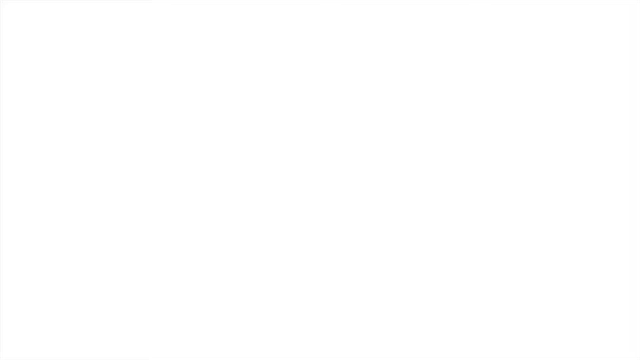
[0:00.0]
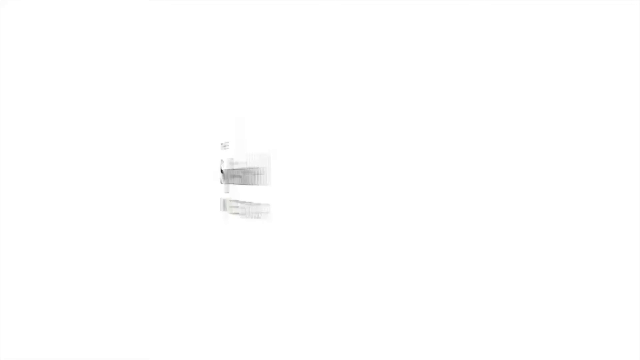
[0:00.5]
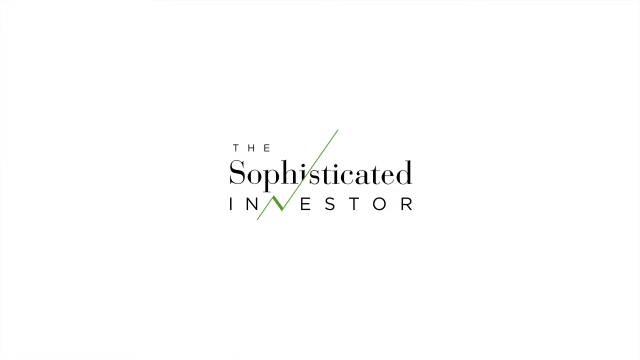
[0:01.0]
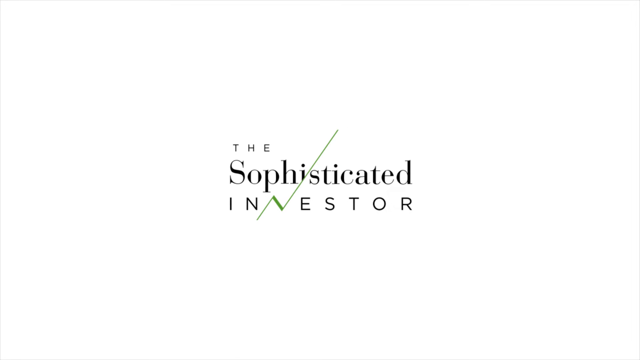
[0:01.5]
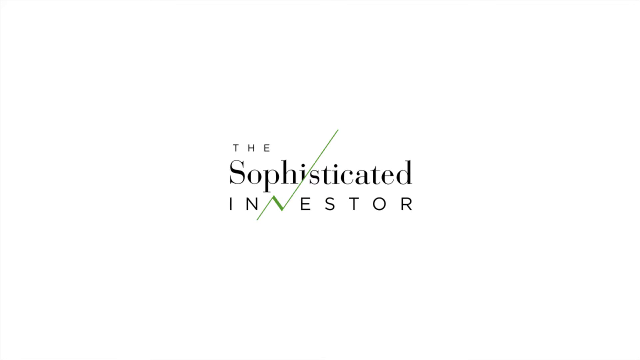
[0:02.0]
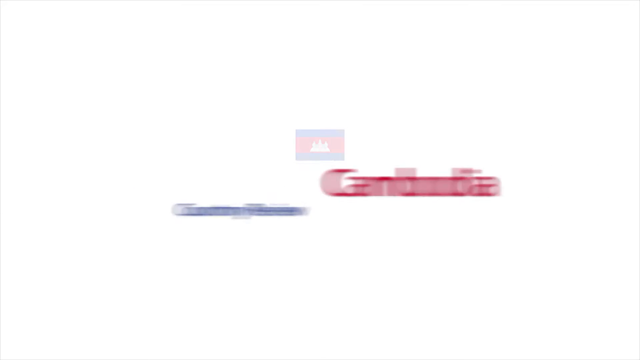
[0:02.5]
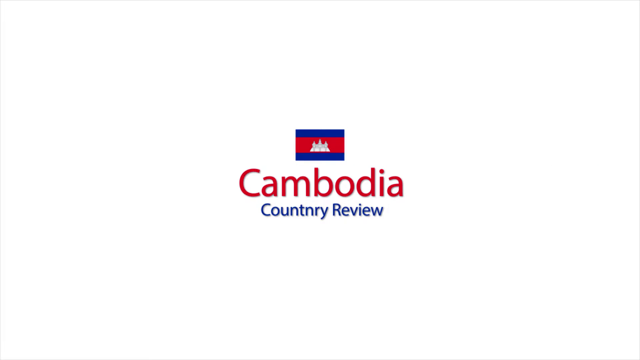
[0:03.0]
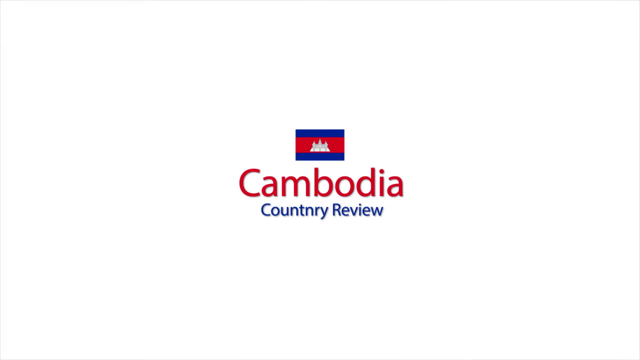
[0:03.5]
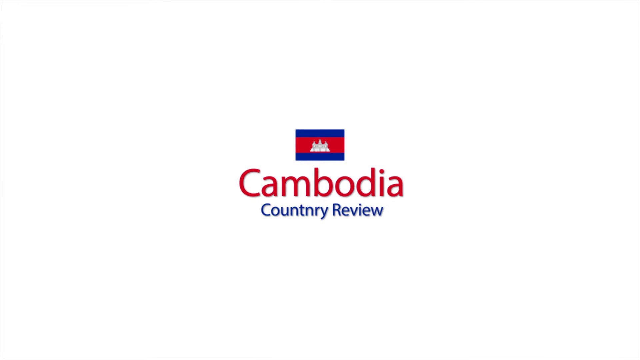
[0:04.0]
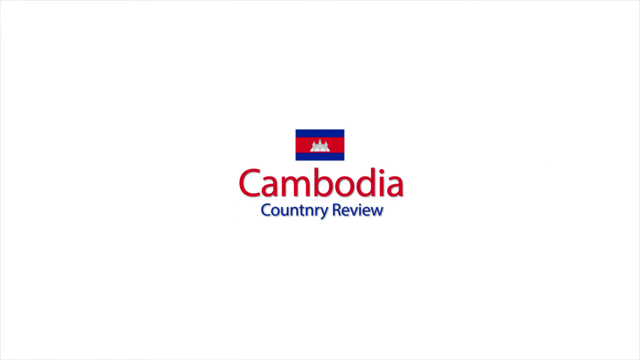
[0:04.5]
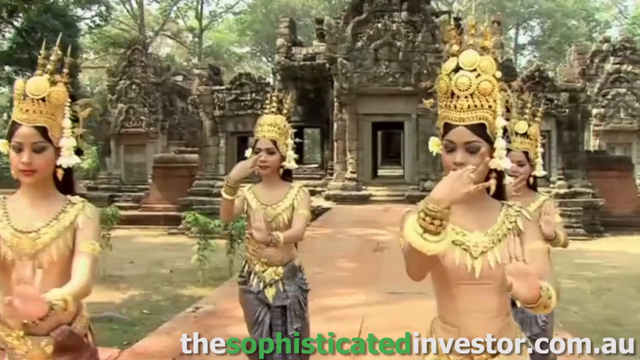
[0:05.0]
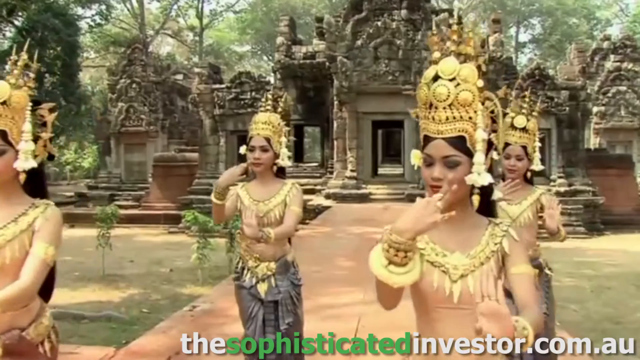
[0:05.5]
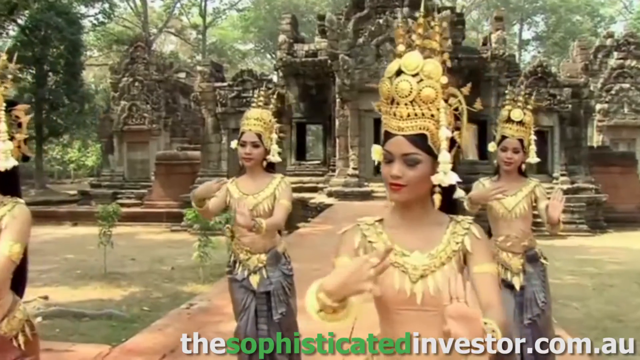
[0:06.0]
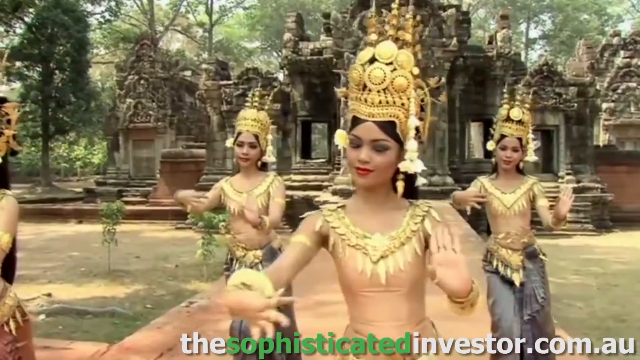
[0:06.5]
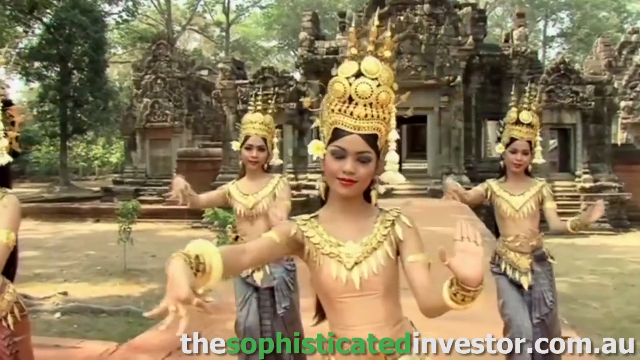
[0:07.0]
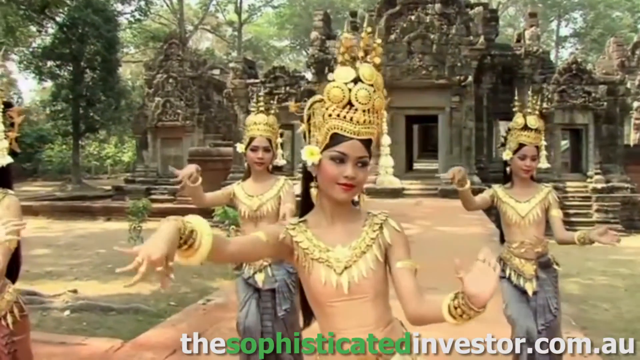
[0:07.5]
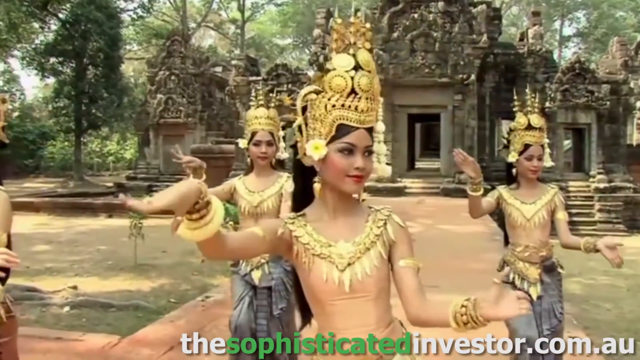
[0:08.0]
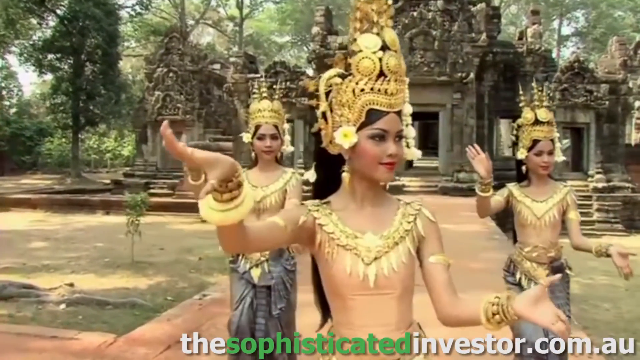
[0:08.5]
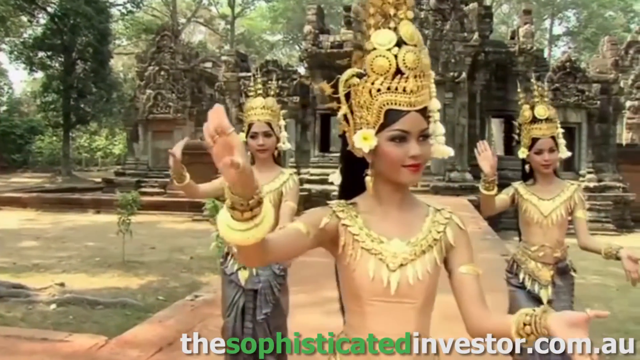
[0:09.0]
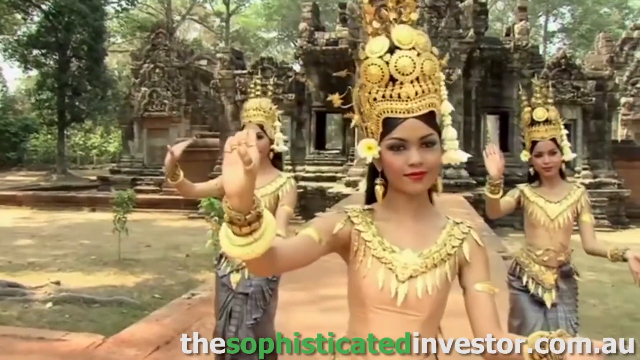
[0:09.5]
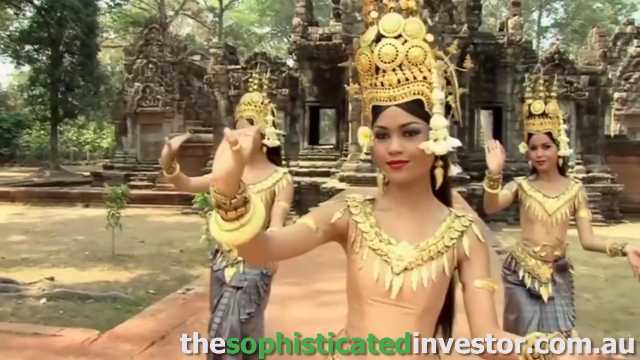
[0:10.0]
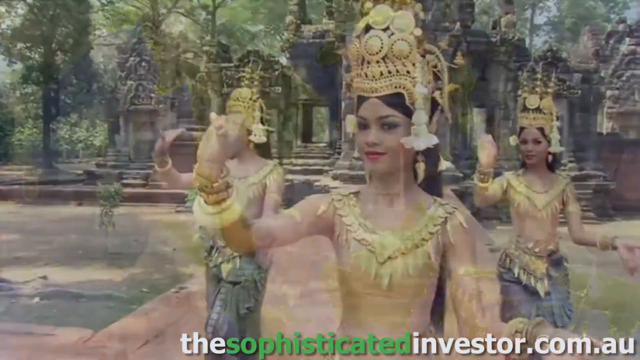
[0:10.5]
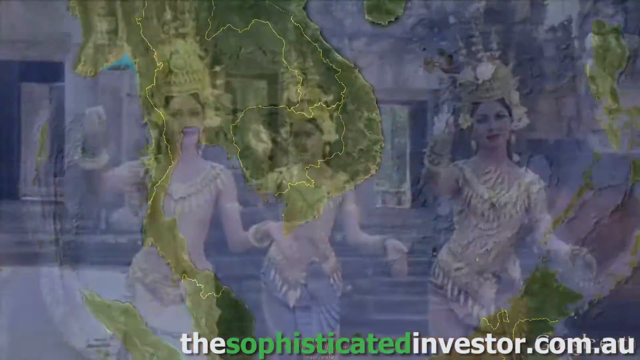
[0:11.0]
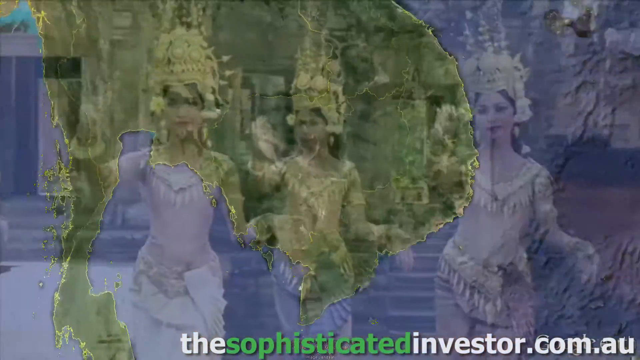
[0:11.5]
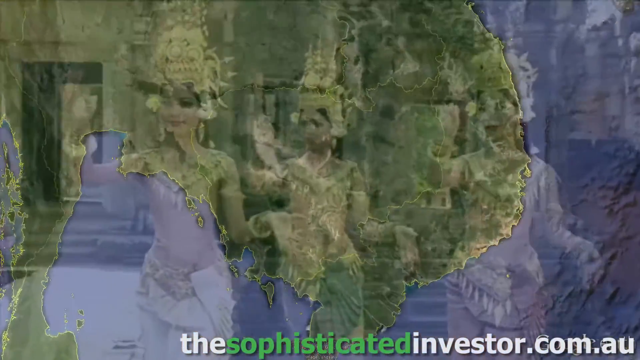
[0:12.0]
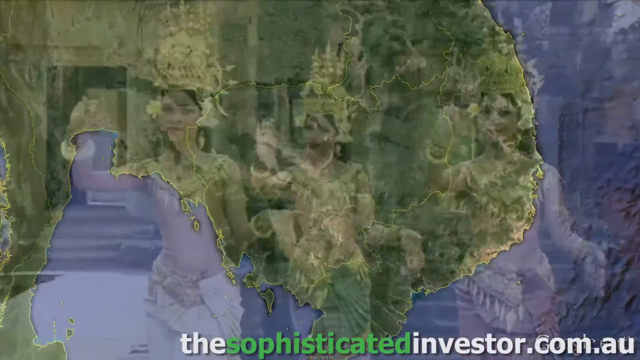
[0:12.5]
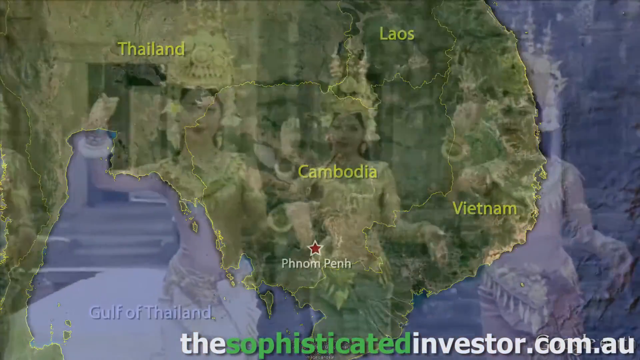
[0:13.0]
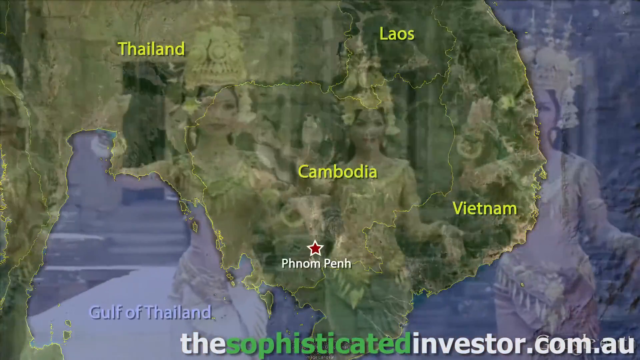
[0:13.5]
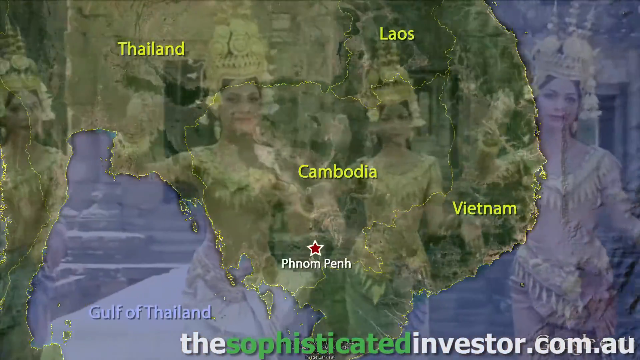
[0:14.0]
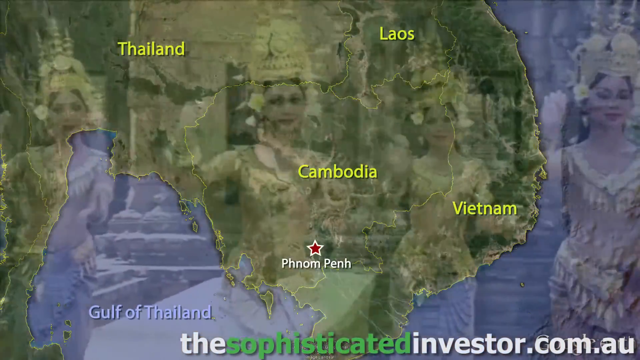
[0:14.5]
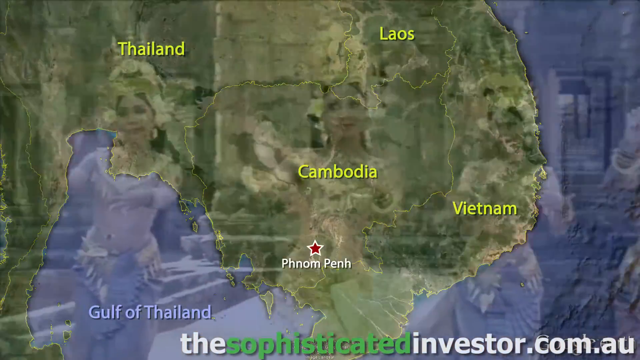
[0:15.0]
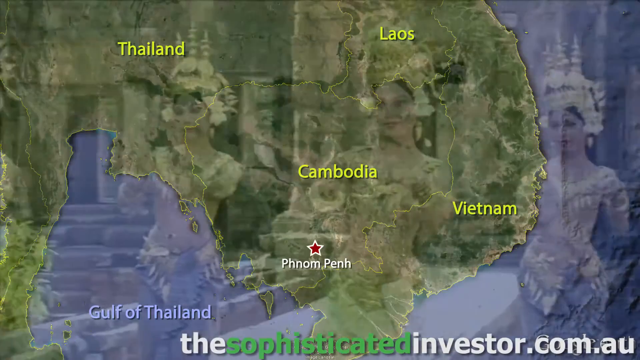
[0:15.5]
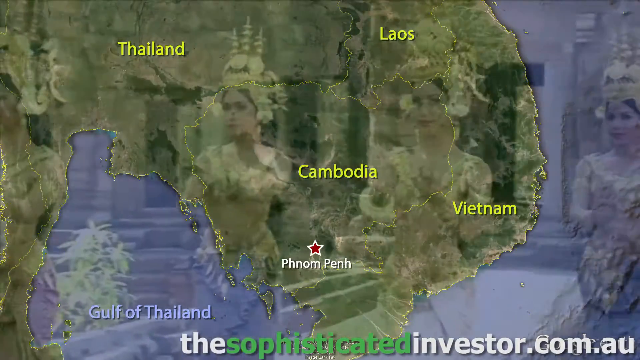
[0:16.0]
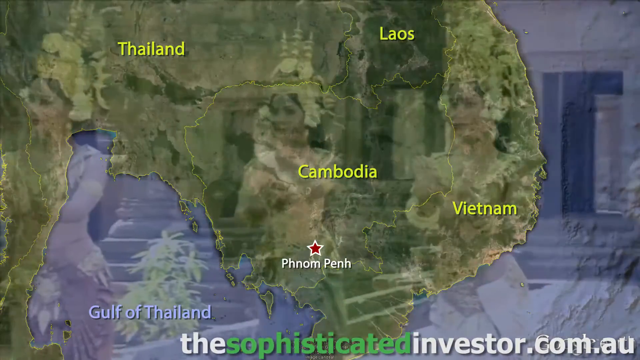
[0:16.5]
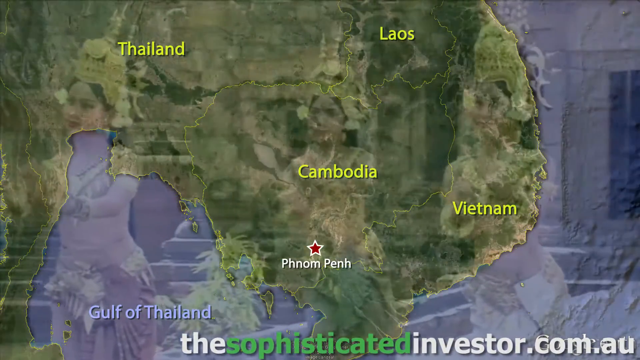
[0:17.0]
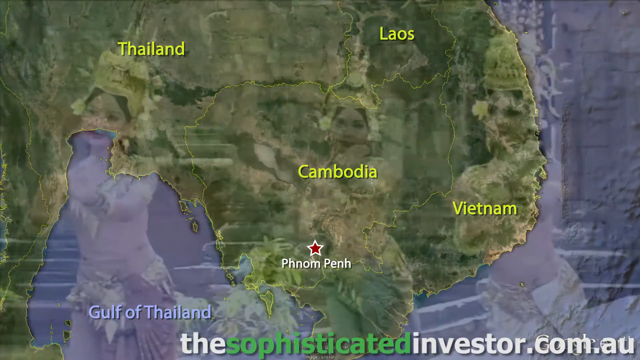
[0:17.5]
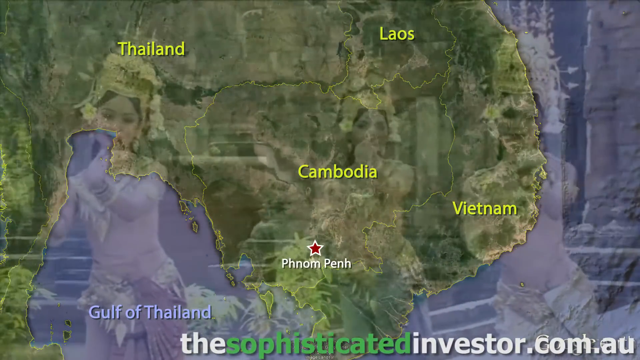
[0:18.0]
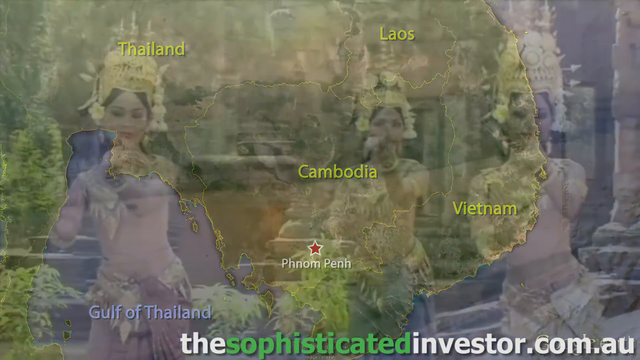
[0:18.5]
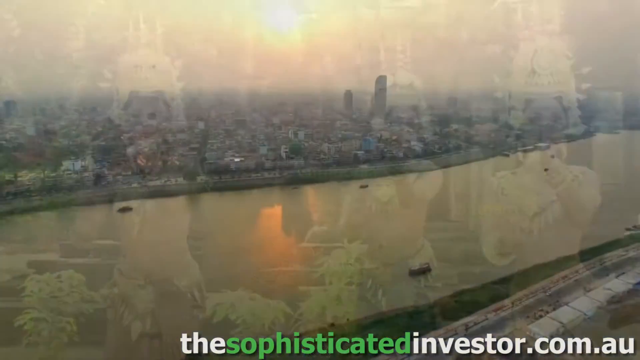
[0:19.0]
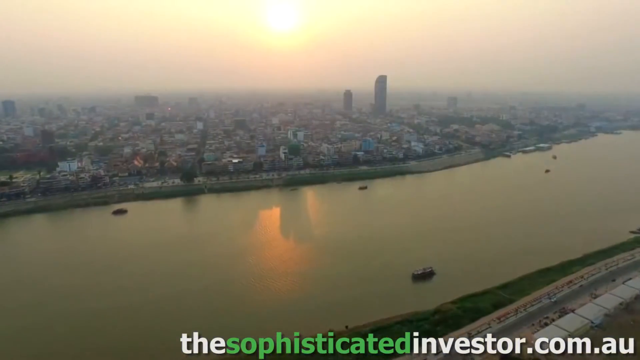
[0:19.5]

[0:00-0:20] The video is a little wider than it is tall. It opens on a white background with a logo in the center: three black words stacked one on top of another reading "the sophisticated investor". This speeds off the screen and another logo comes in reading "Cambodia country review", with a flag on top. The flag is blue and red, with horizontal stripes going blue, red, then blue, and a white crown-looking structure within the red. The video then cuts abruptly to four women dancing, facing generally toward seven o'clock. They wear gold bracelets, necklaces and crowns on their heads, and slowly wave their hands in the air in very intricate, detailed movements. The scene then changes to a map of terrain, generally green and blue to designate the land and water, with four countries labeled: Thailand, Cambodia, Laos and Vietnam.